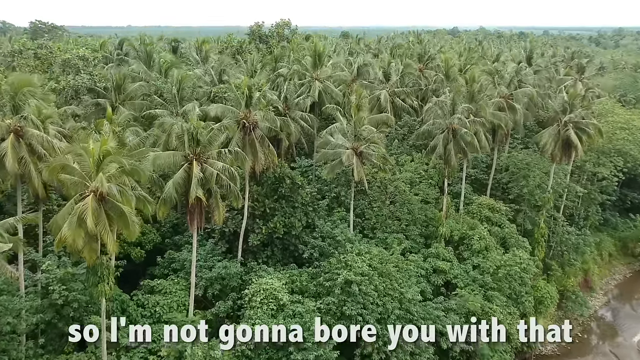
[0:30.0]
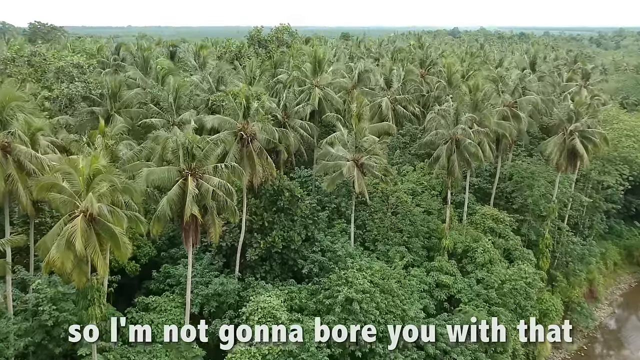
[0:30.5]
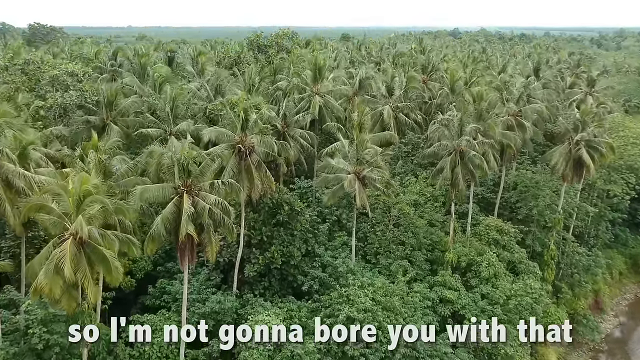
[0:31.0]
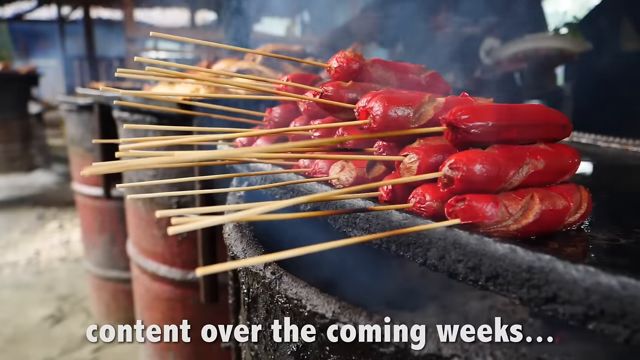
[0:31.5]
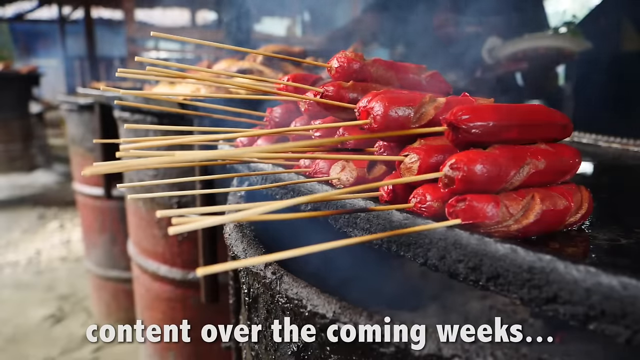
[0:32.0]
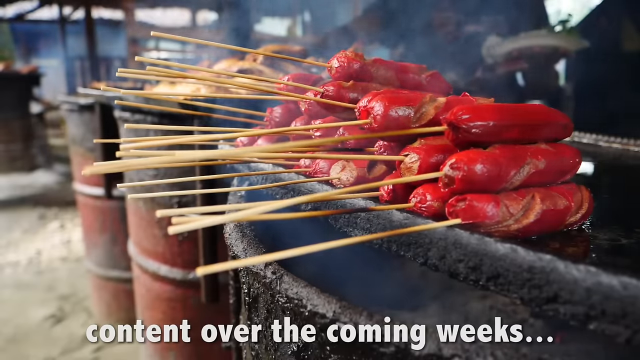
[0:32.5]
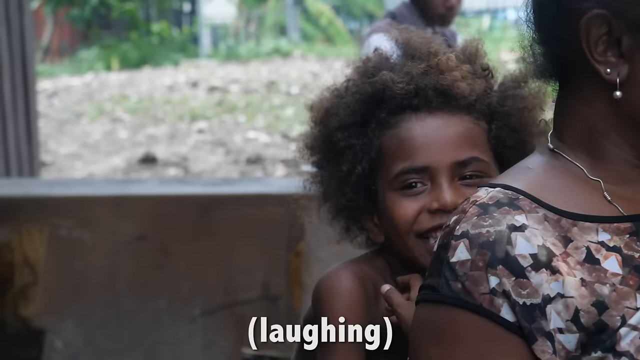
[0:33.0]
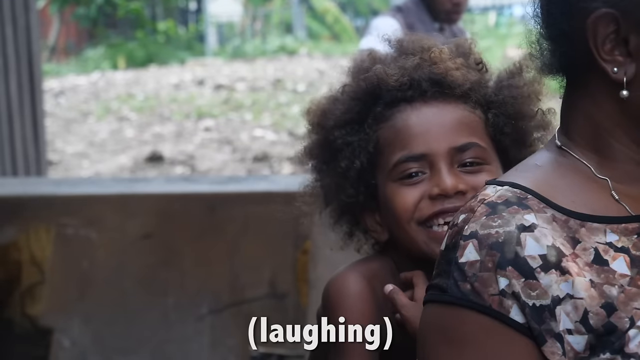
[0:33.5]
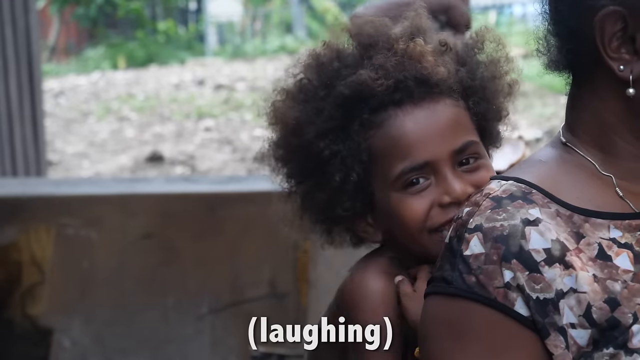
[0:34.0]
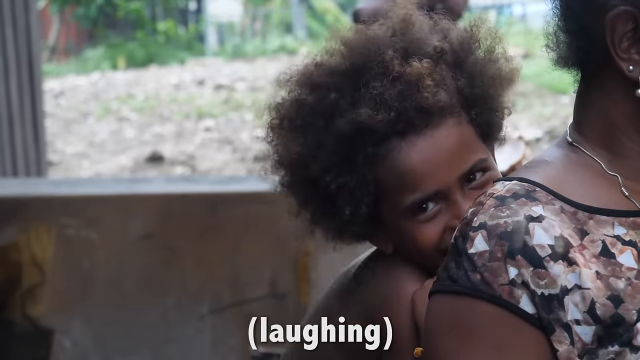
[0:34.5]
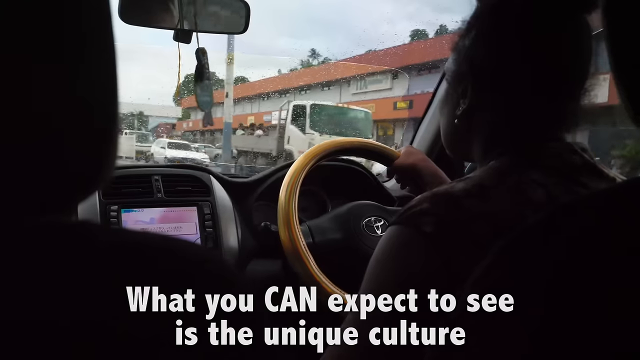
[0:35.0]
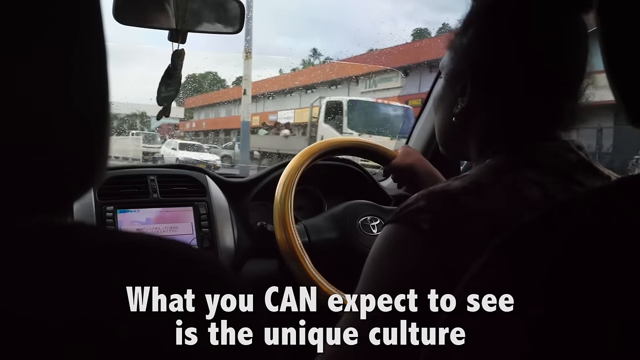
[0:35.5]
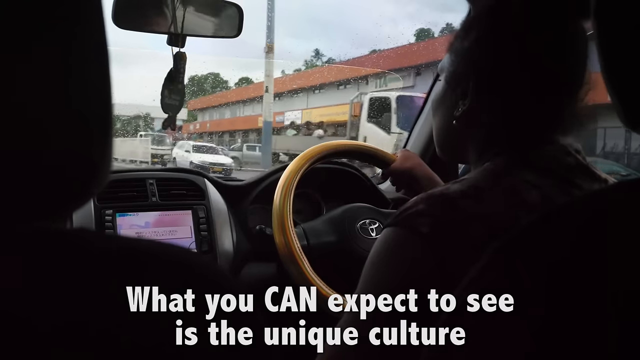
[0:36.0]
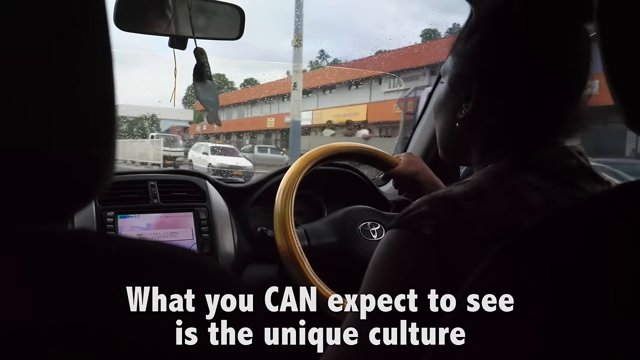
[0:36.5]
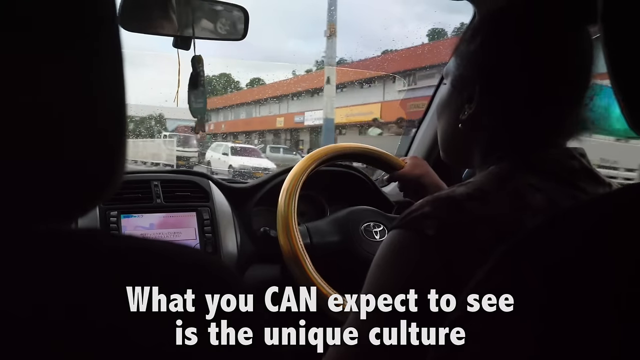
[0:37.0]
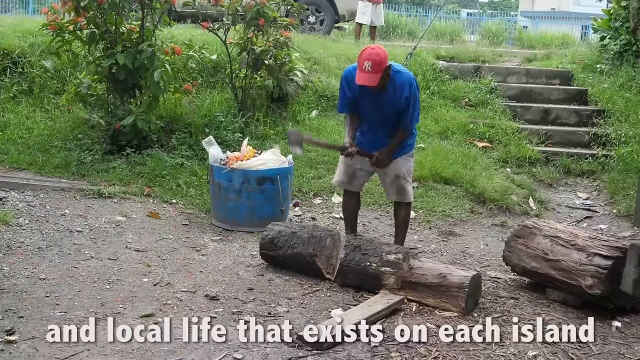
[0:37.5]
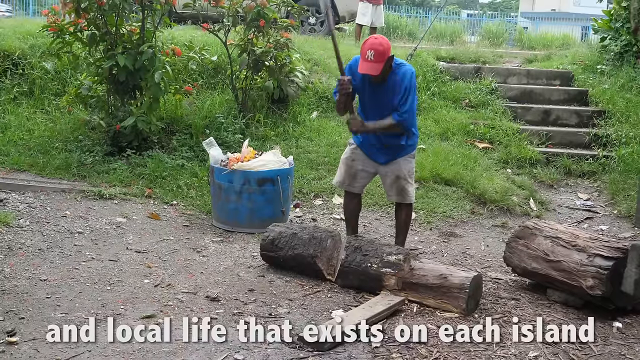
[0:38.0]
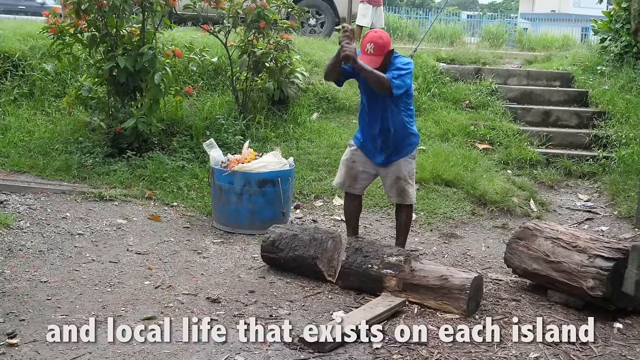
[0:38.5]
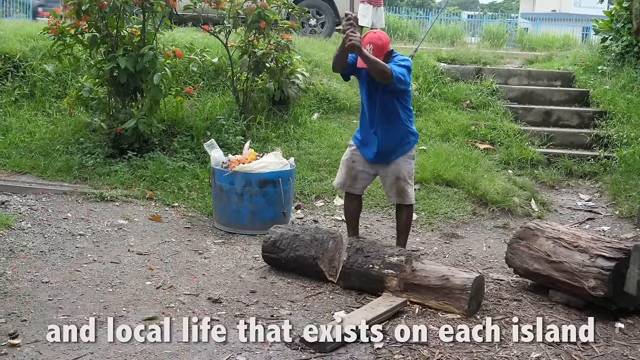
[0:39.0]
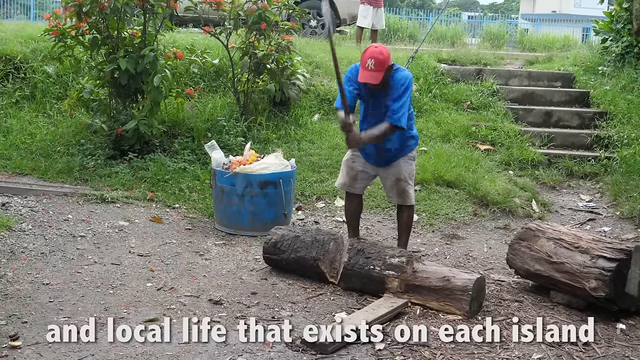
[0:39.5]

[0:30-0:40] Food is shown, along with palm trees and the surroundings of the islands. Giggling locals are shy around the camera, and a man uses an axe to cut logs of wood.